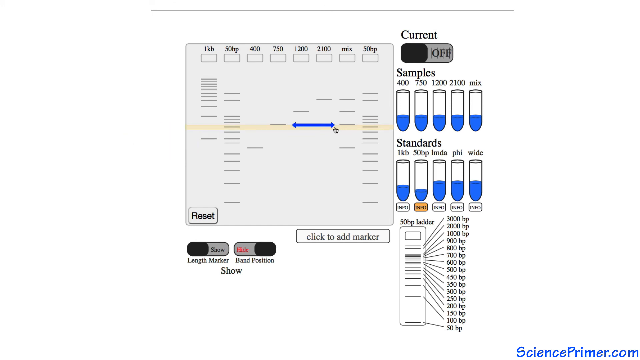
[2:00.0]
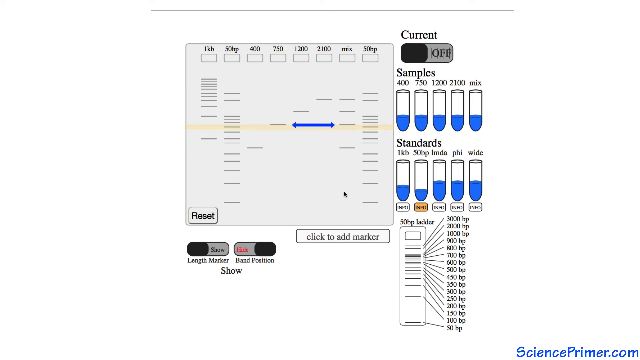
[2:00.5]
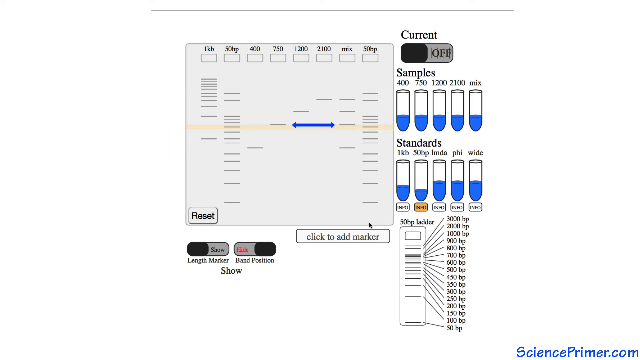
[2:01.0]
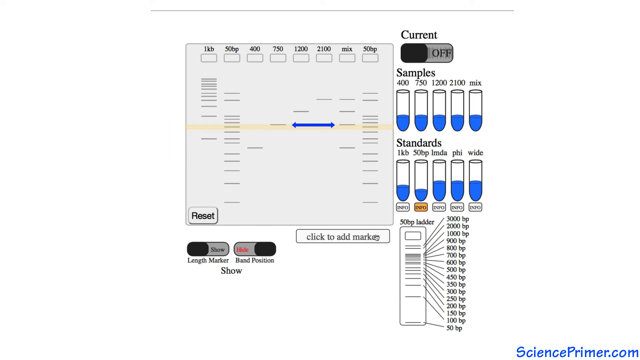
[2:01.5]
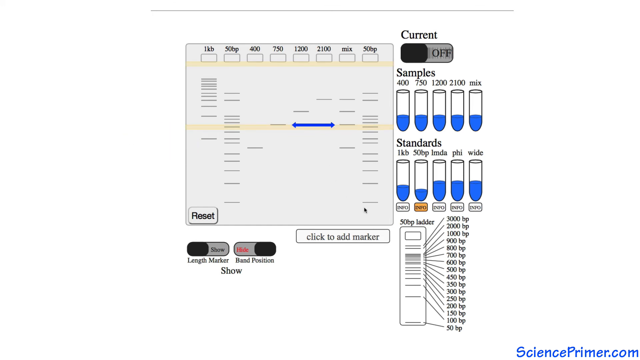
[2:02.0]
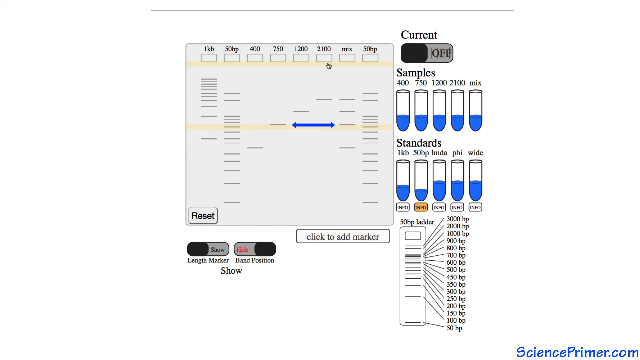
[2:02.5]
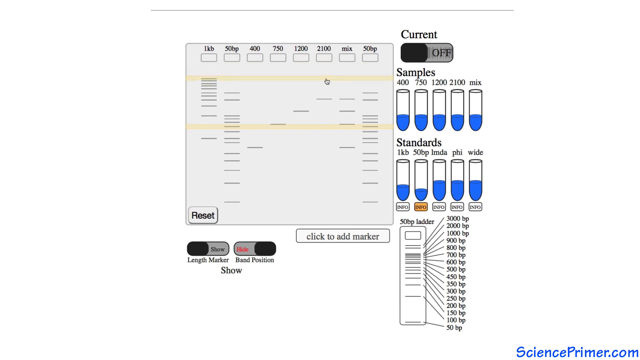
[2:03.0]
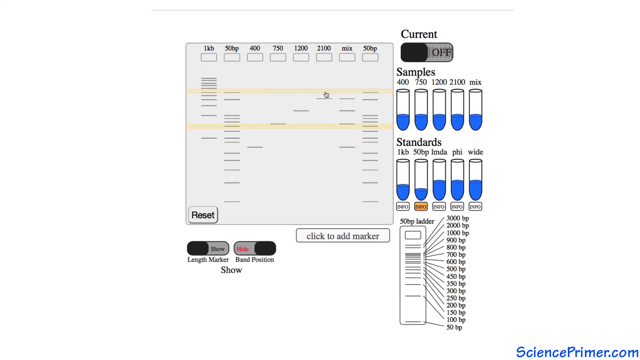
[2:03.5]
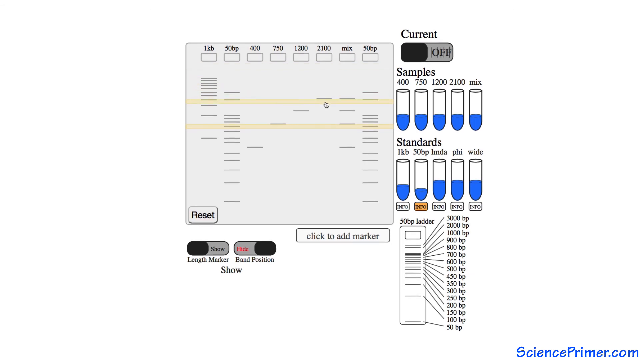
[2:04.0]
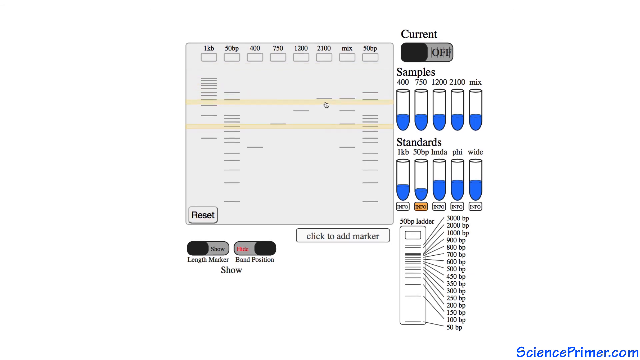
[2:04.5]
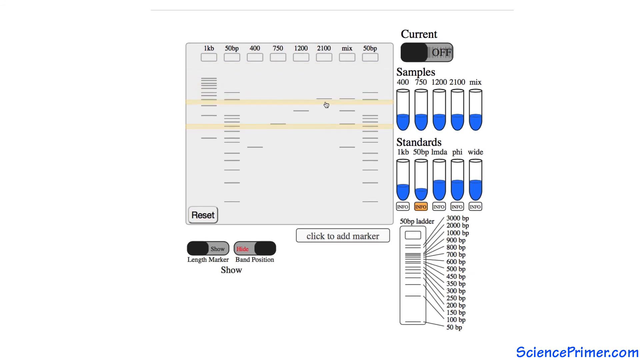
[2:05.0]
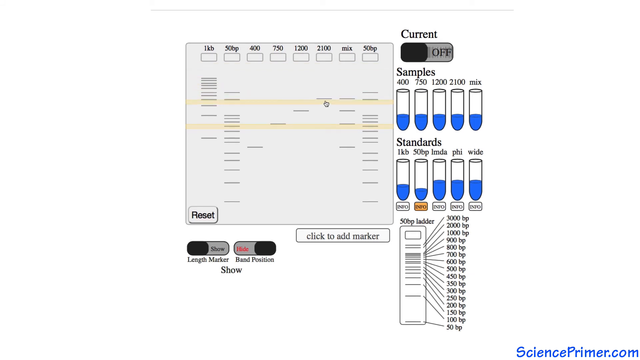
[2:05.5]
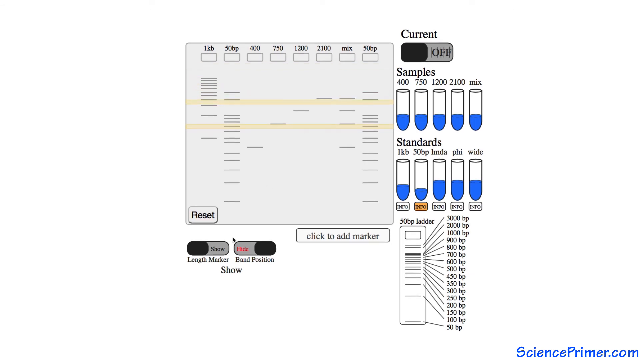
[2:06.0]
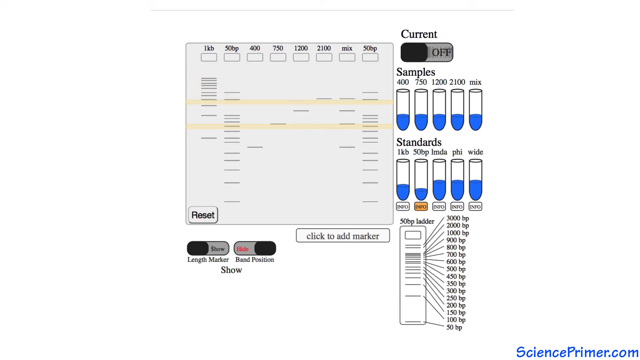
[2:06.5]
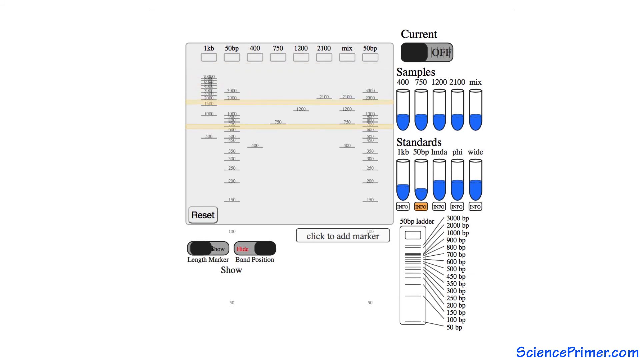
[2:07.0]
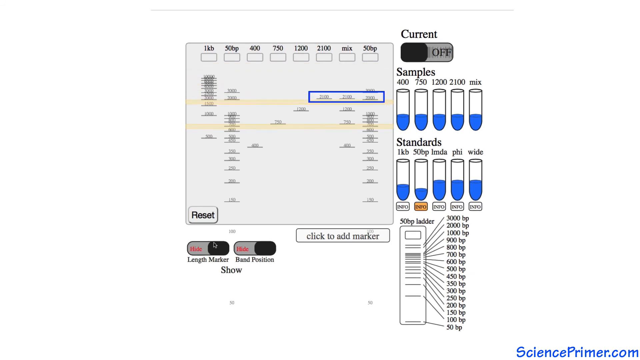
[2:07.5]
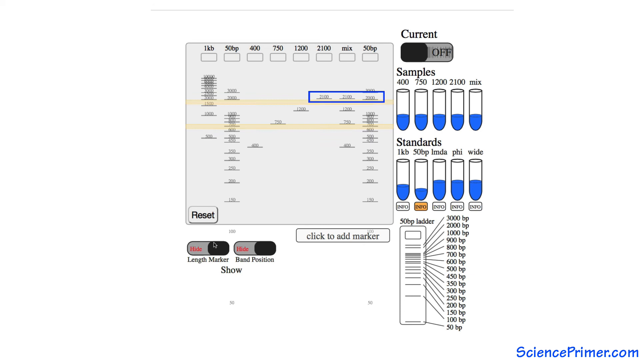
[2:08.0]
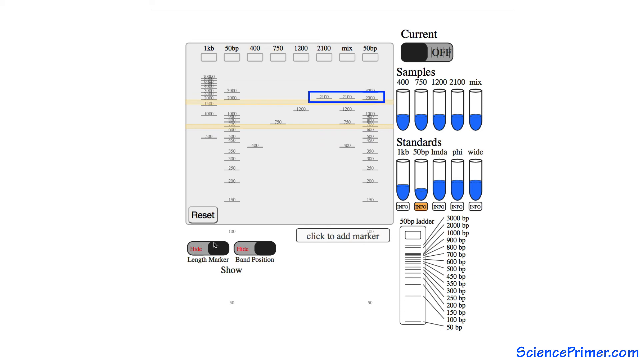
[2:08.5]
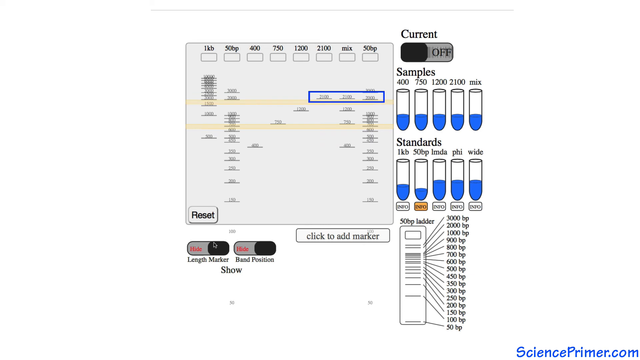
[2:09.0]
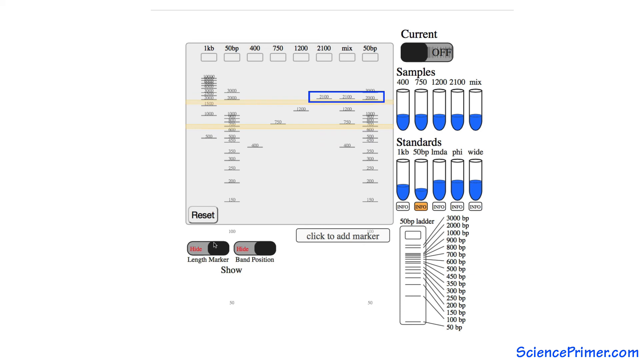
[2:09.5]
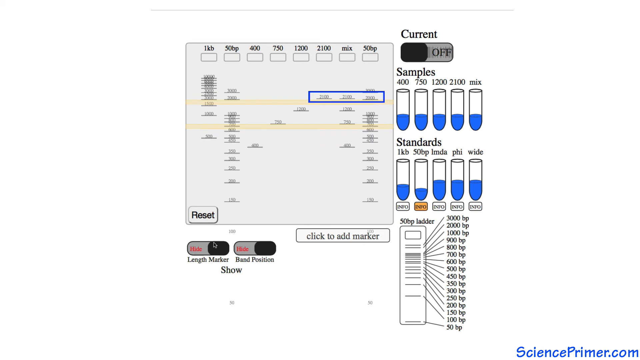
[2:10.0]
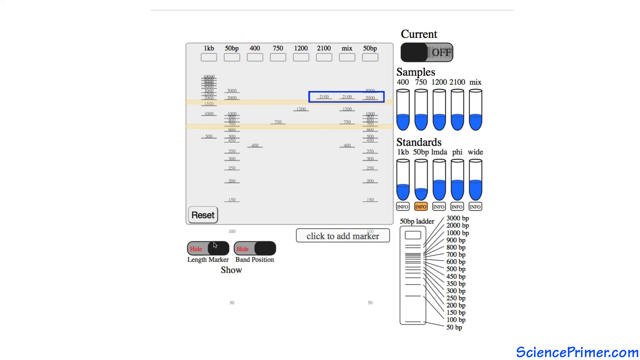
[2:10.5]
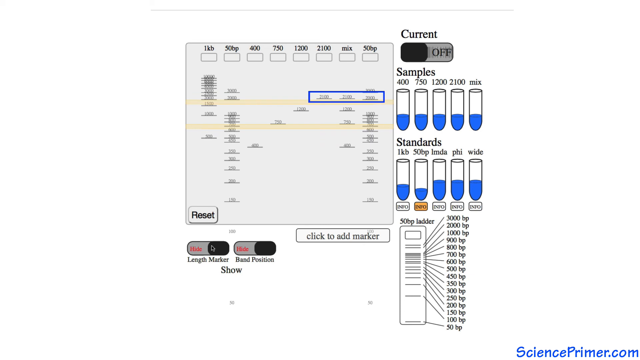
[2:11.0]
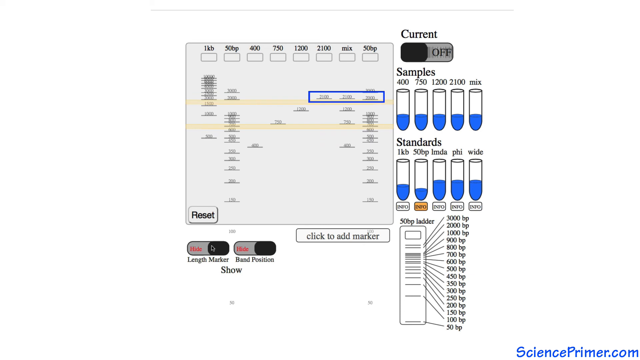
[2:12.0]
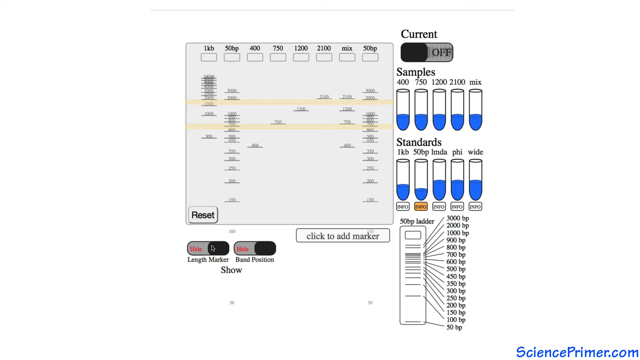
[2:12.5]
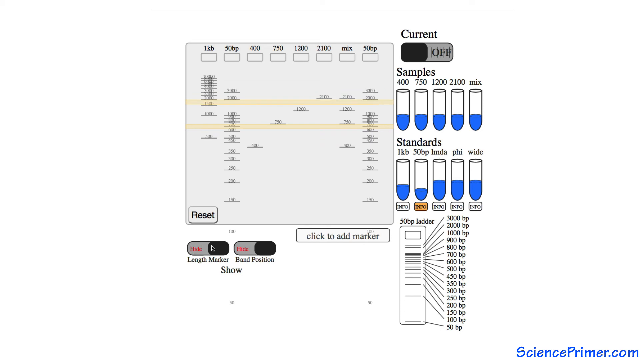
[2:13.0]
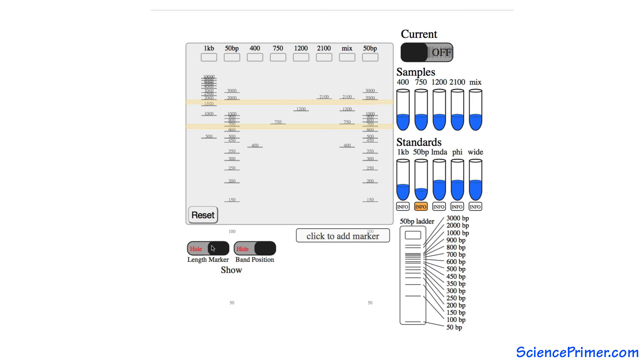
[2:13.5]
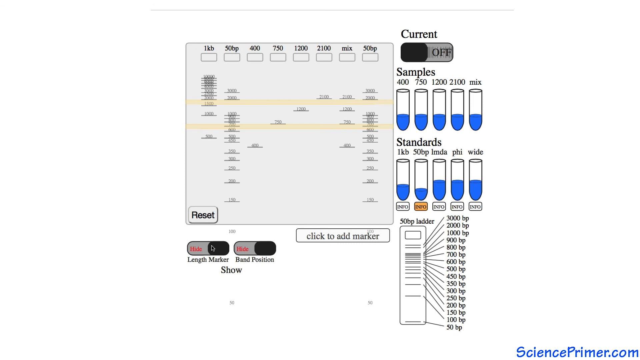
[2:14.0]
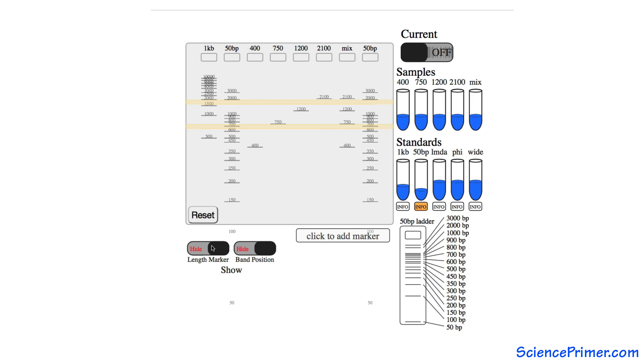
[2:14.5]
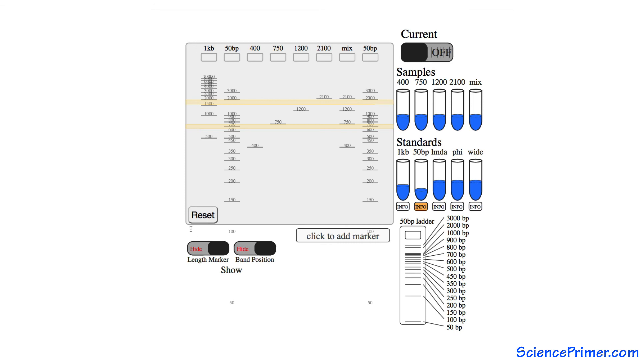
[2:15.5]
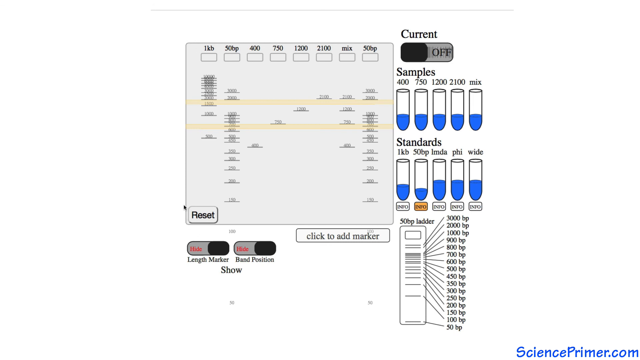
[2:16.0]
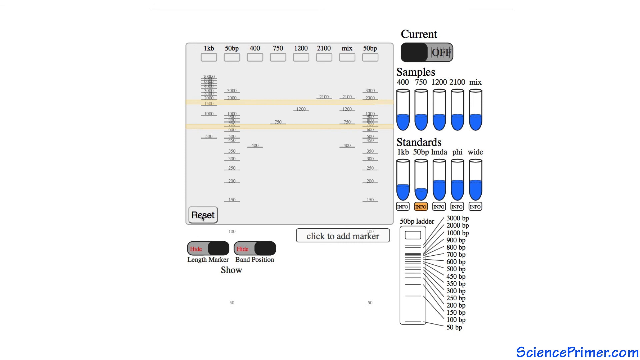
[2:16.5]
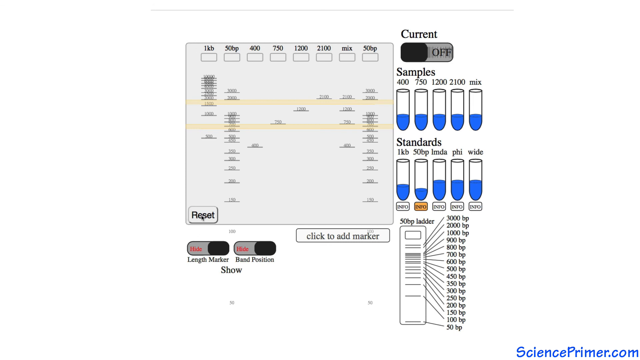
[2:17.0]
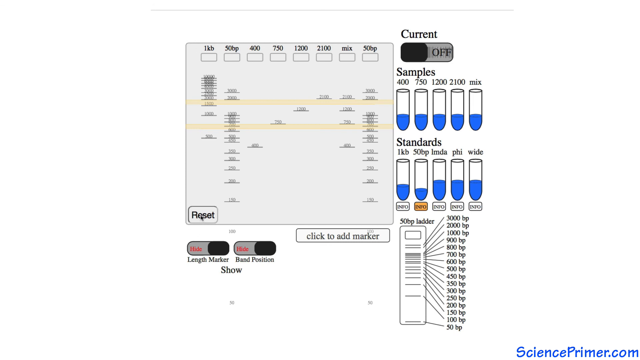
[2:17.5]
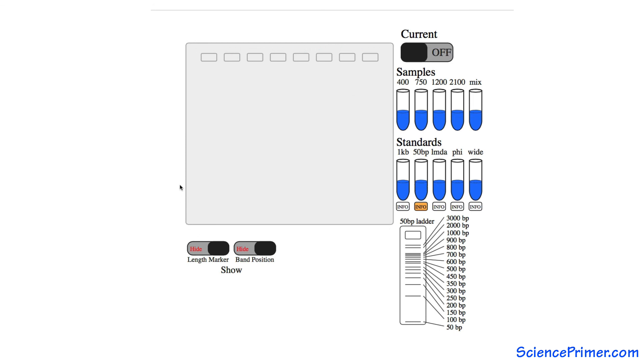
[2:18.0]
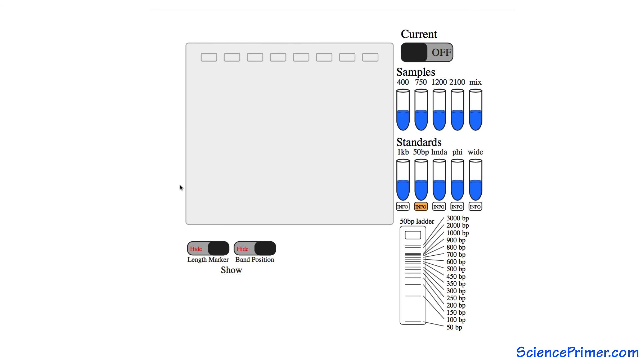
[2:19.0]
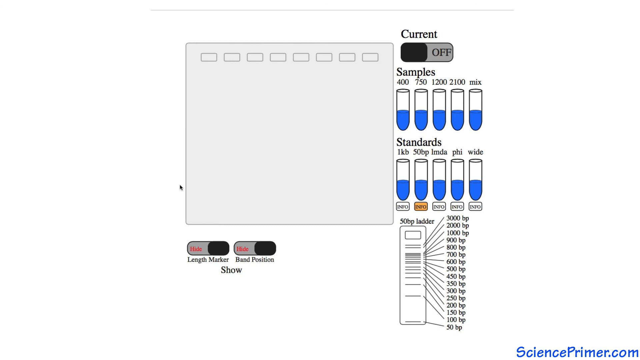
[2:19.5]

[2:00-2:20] A yellow bar highlights a row of four different gray lines, with a blue line with arrows on either side in between. The user moves the mouse to the button that says "click to add marker," and another yellow bar appears, highlighting a row above the one previously highlighted. The user then moves the mouse to the bottom left toggle button, for the length marker, and turns it to hide. A blue rectangle is shown on top of some of the lines on the right side of the experiment. When the toggle button is pressed, the simple gray lines have numbers displayed on top of them, too small to be legible. The blue rectangle disappears, and the user moves the mouse to the reset button. The blue test strips return to normal and the gray rectangle goes back to its original state.